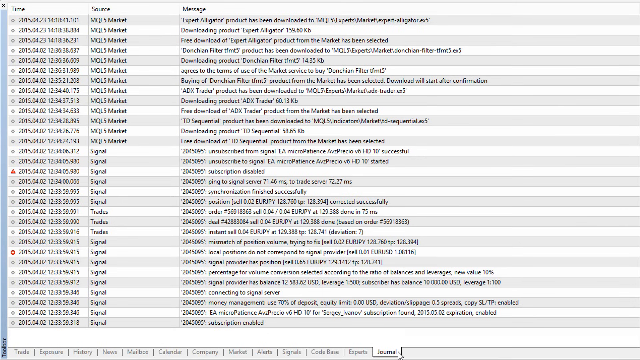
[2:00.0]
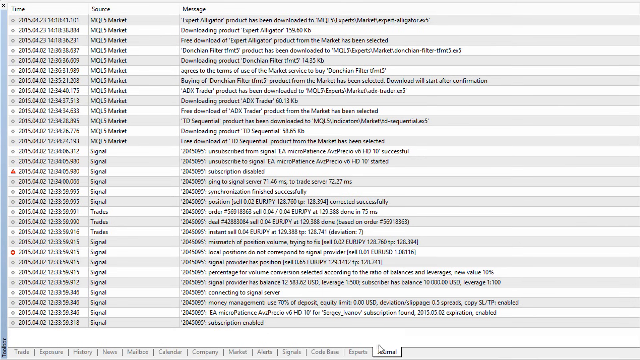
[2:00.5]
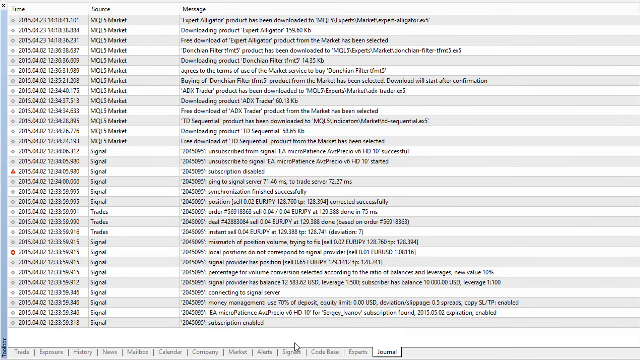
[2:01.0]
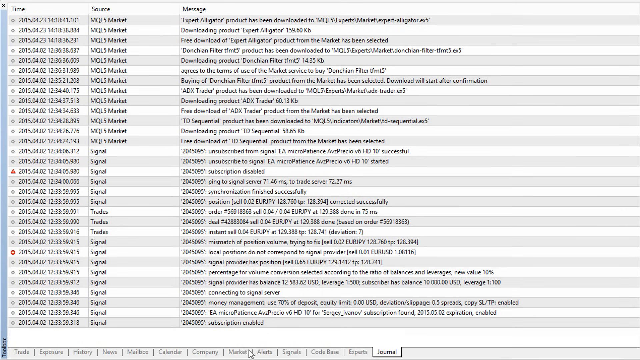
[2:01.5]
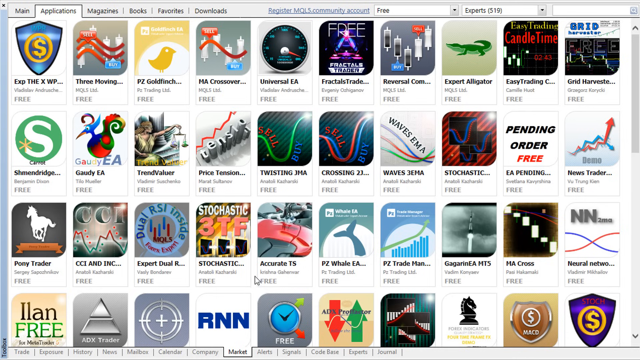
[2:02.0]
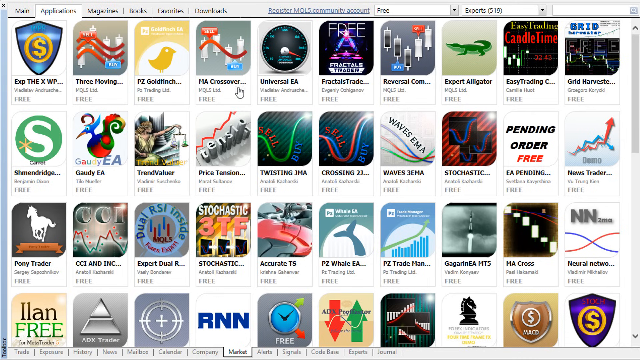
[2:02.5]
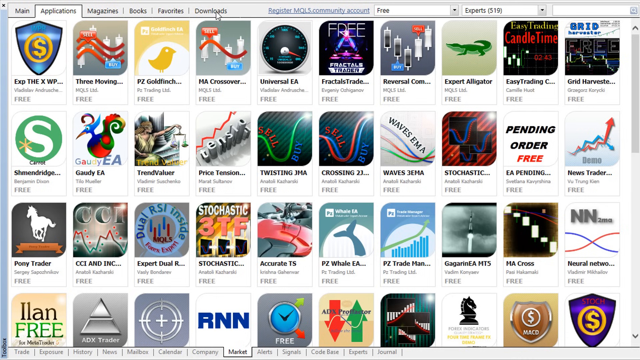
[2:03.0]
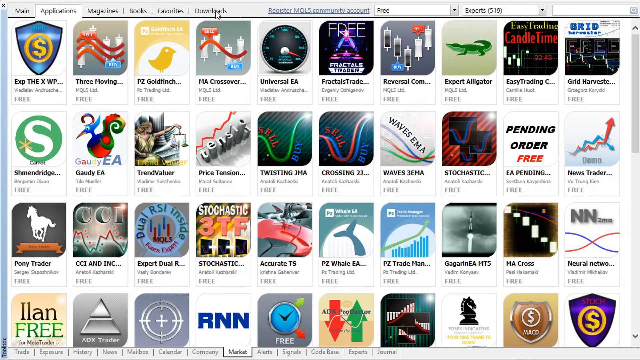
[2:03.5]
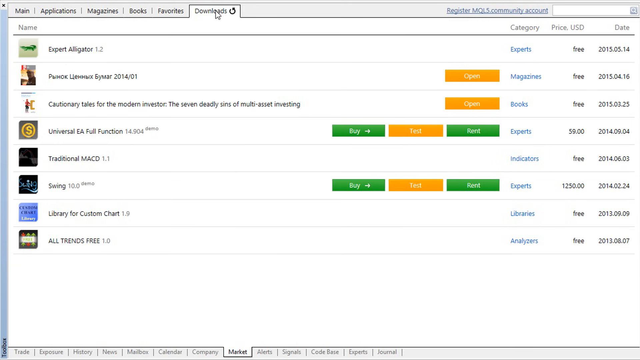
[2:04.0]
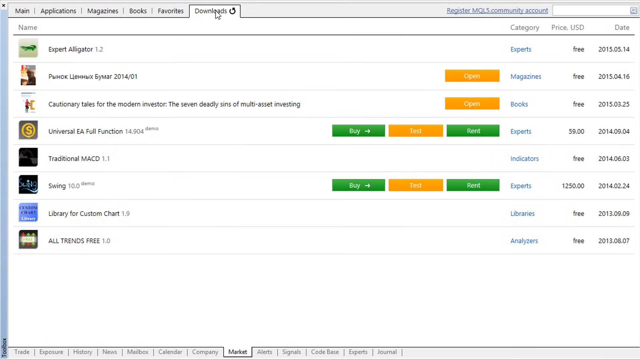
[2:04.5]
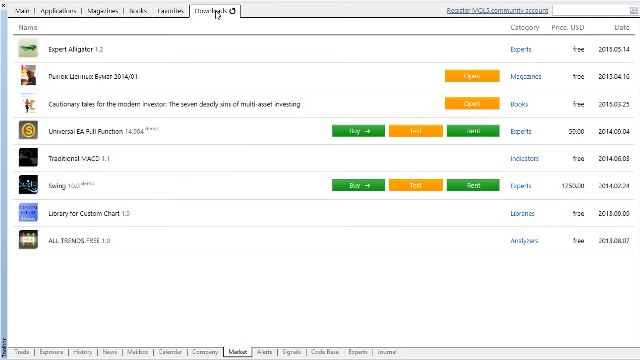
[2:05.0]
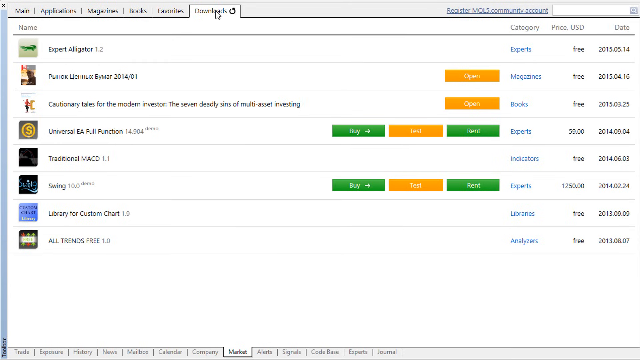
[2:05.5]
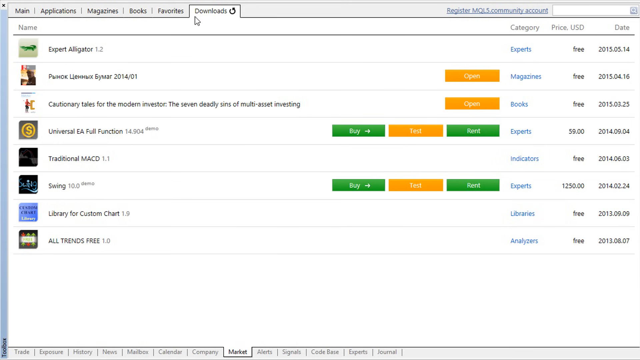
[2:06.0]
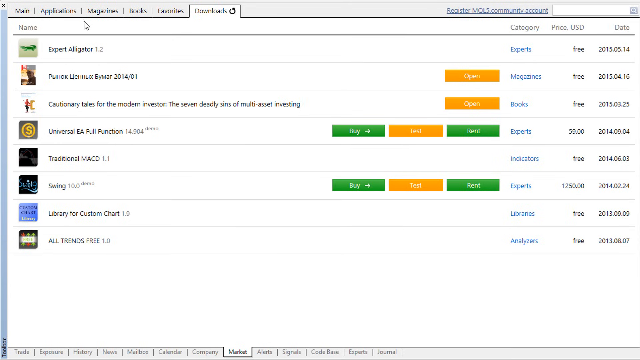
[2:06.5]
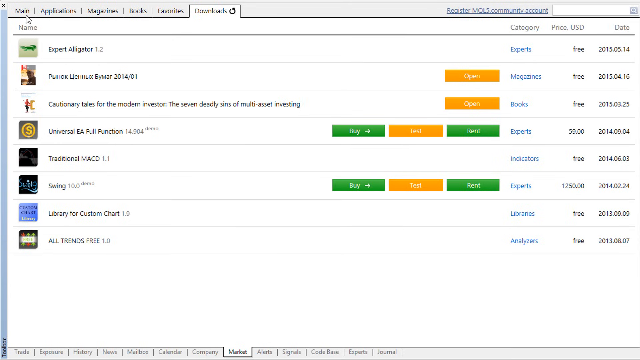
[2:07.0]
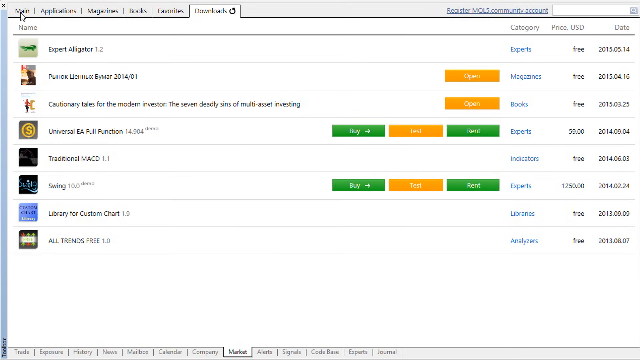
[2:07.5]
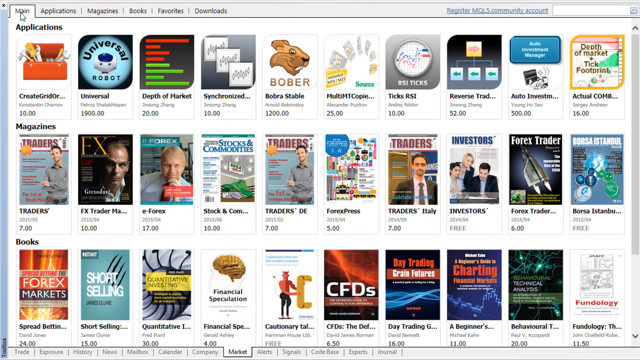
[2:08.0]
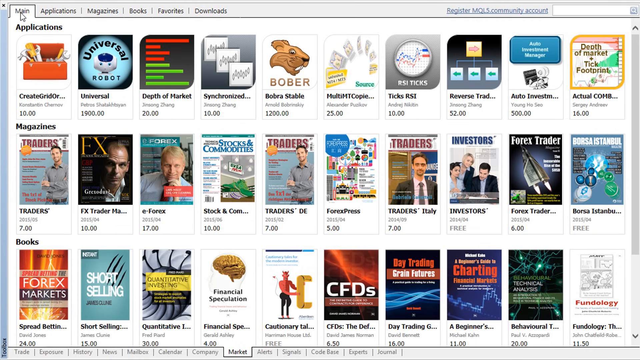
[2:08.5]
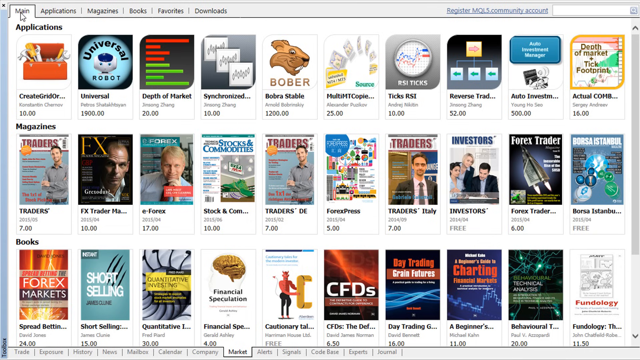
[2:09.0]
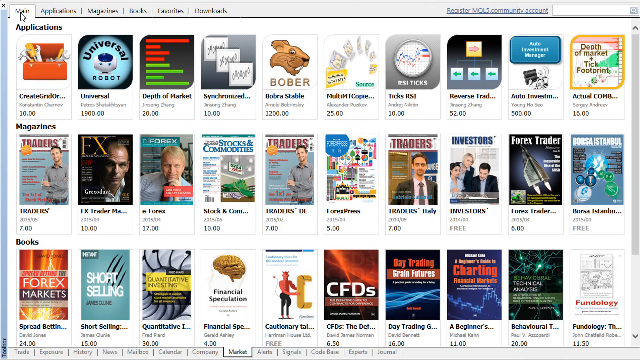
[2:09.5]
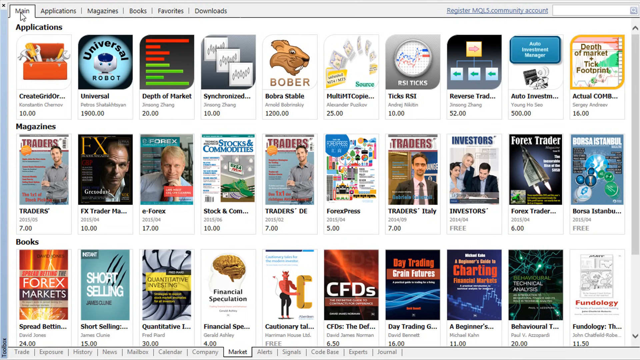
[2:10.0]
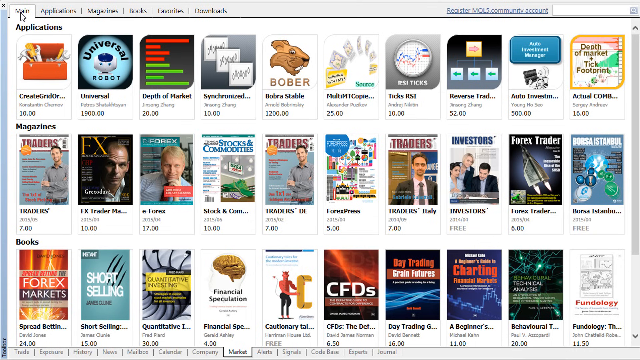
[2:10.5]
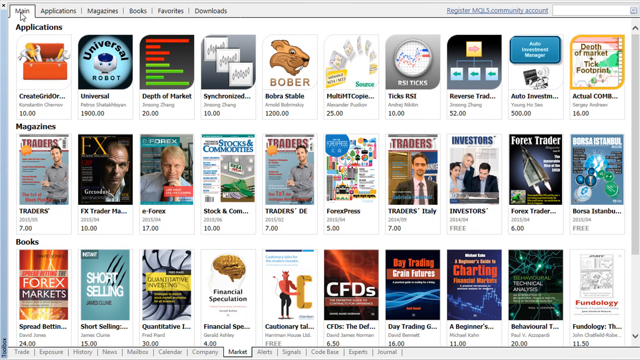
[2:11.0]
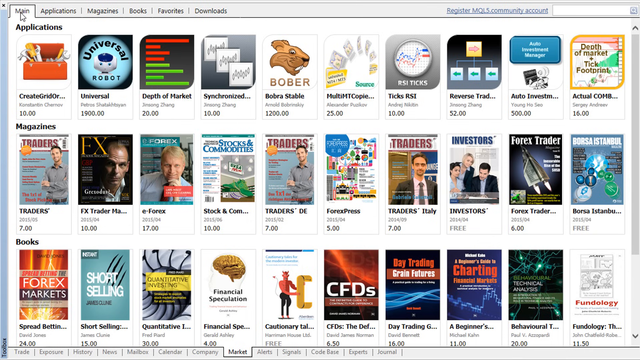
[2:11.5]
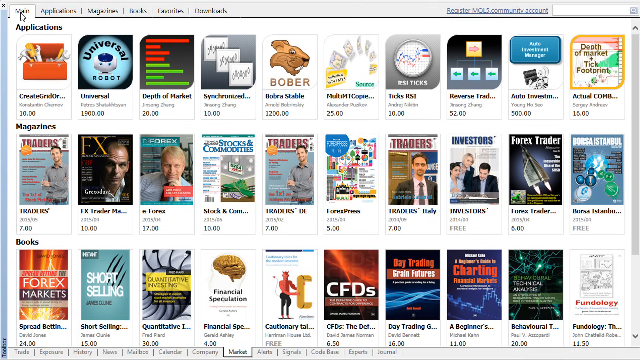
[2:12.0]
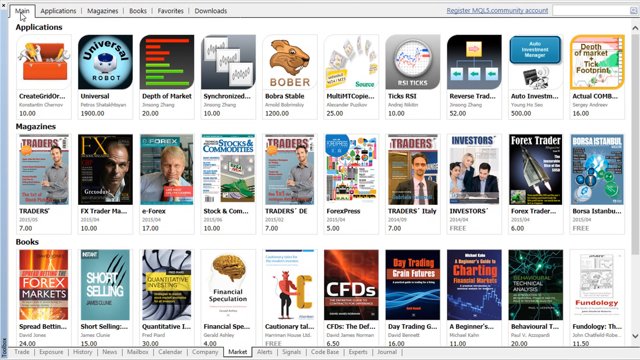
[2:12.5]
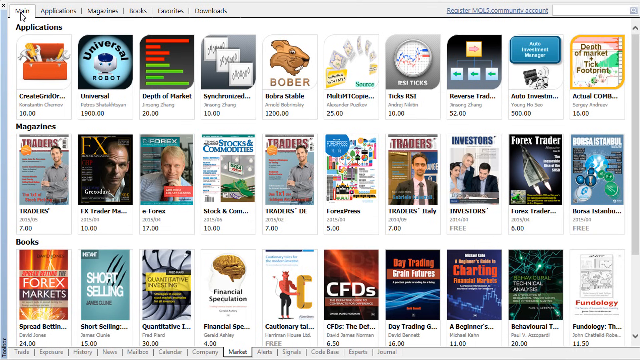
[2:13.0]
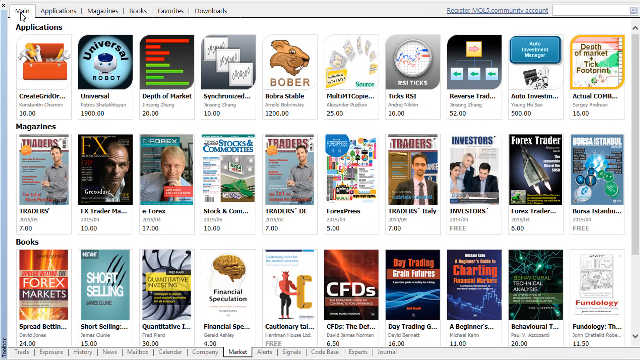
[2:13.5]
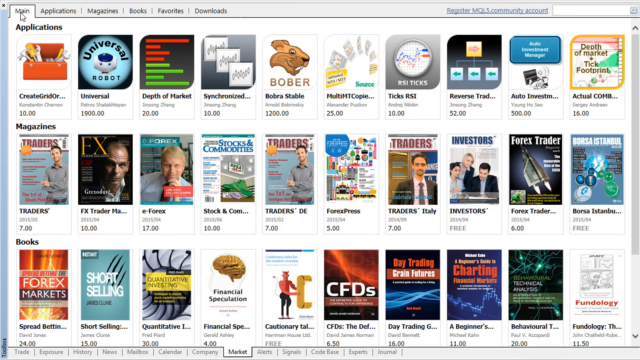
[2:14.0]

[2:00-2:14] After the list of messages, the screen changes back to the screen showing all the books, with 40 different book covers. The mouse cursor goes up to select the downloads, showing the download history: a total of eight e-books downloaded. To the right is how much was spent on each one, the date it was downloaded, and the category it falls under. One e-book cost $59, another cost $1,250, and all the other e-books were free. The mouse cursor then moves to the tab in the top left corner called the main tab and clicks it, returning to the main screen, which shows 40 different applications and their covers.